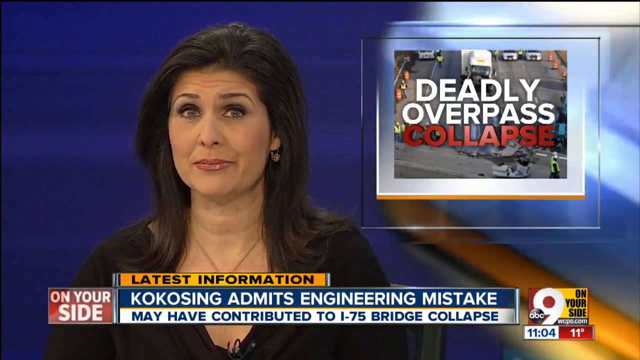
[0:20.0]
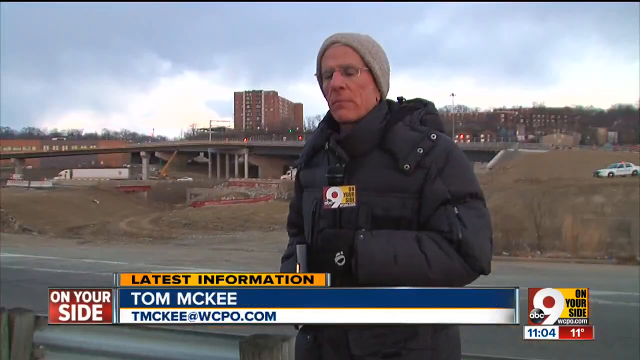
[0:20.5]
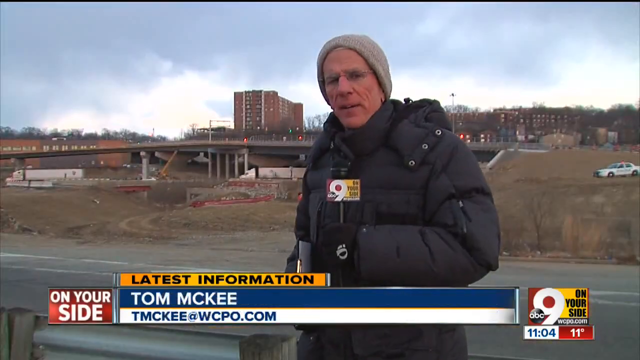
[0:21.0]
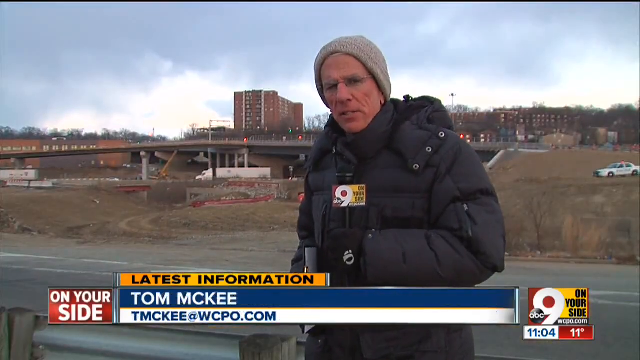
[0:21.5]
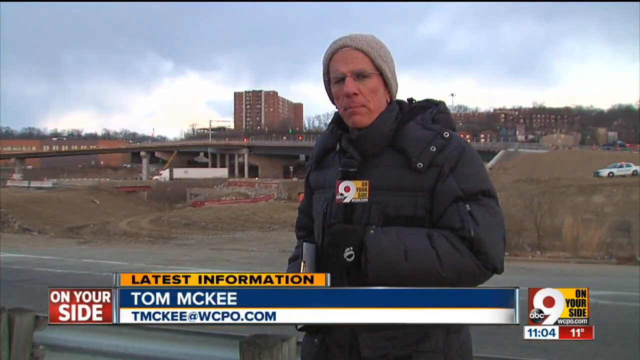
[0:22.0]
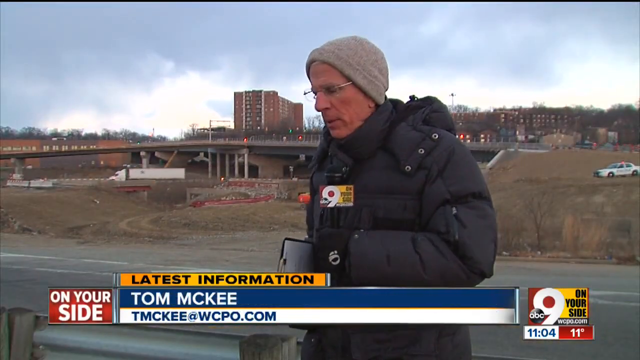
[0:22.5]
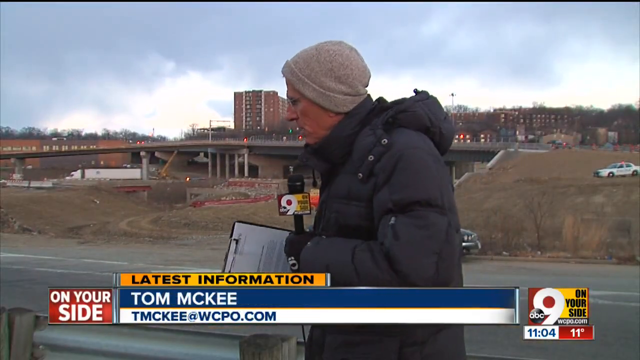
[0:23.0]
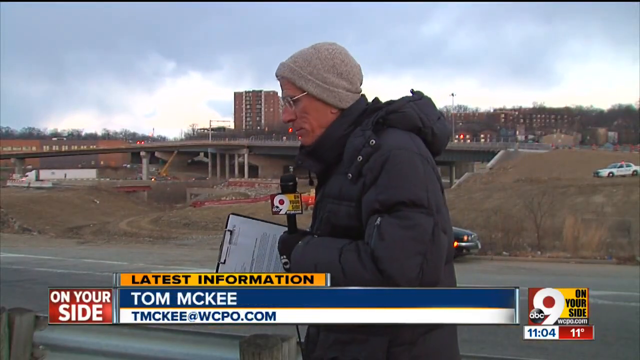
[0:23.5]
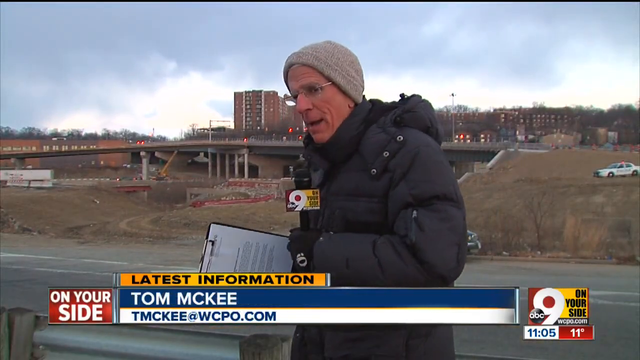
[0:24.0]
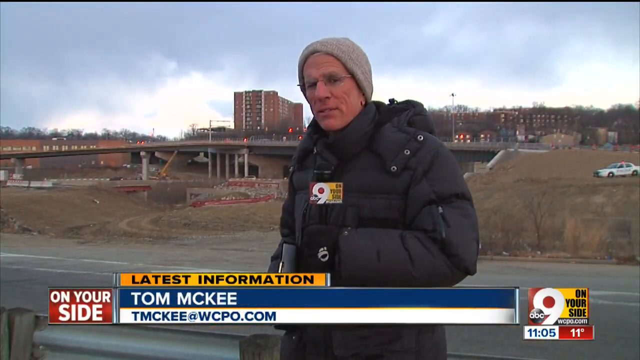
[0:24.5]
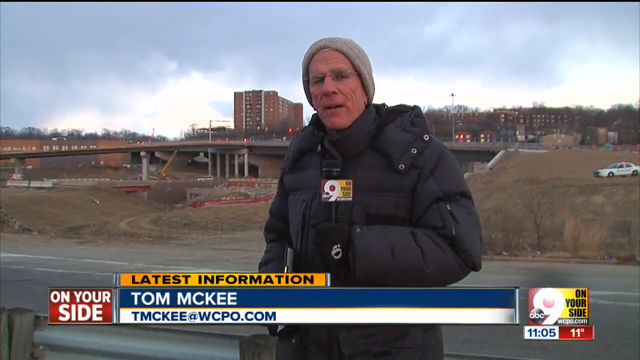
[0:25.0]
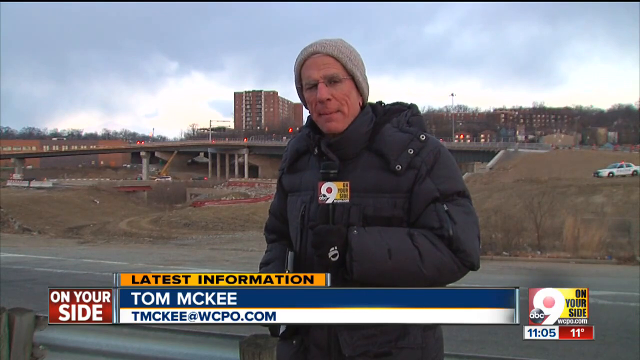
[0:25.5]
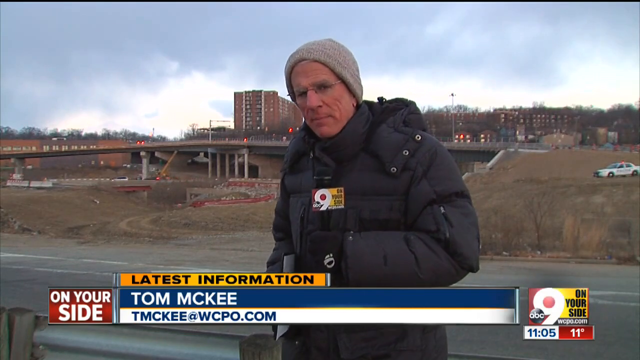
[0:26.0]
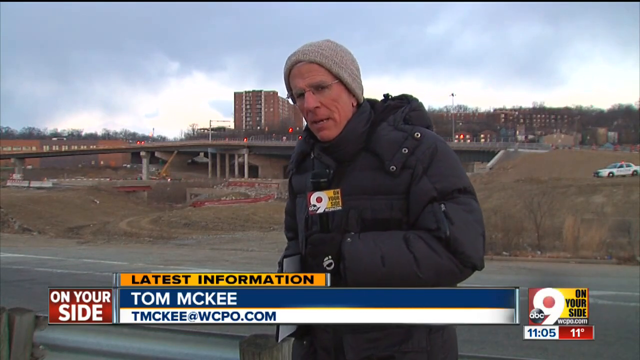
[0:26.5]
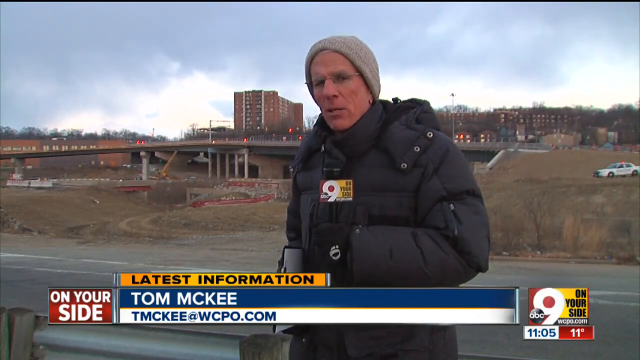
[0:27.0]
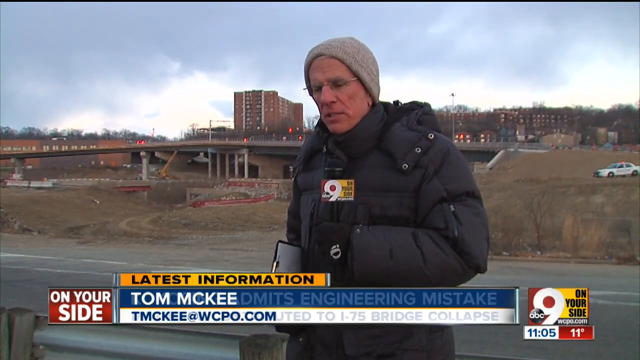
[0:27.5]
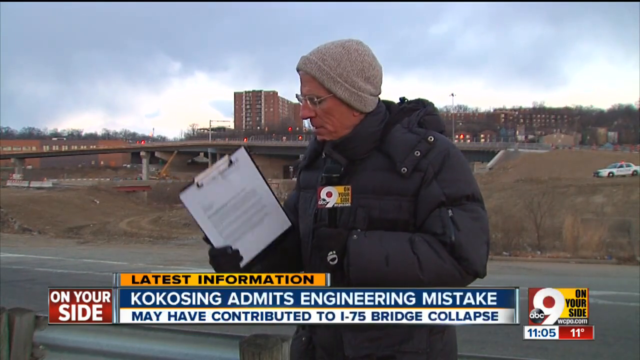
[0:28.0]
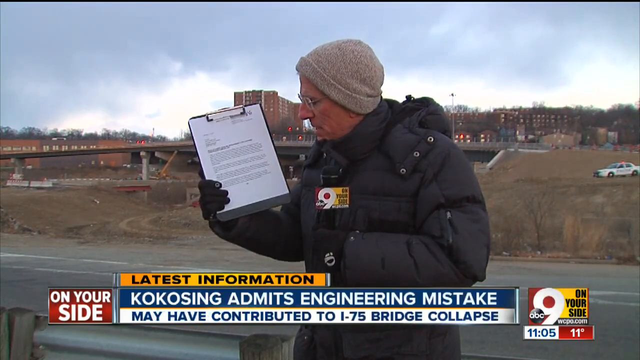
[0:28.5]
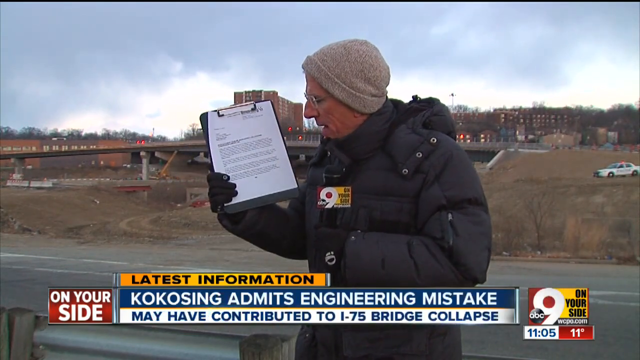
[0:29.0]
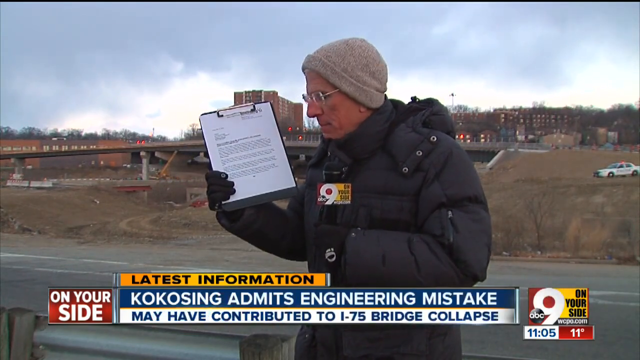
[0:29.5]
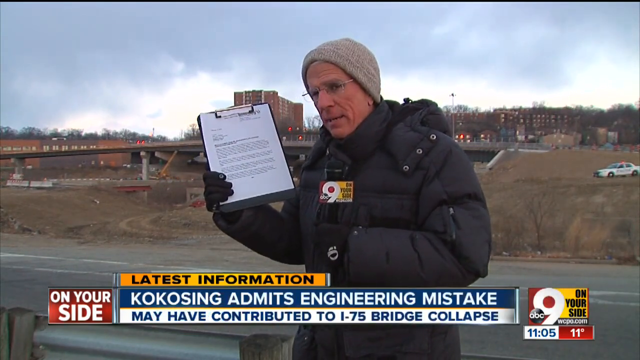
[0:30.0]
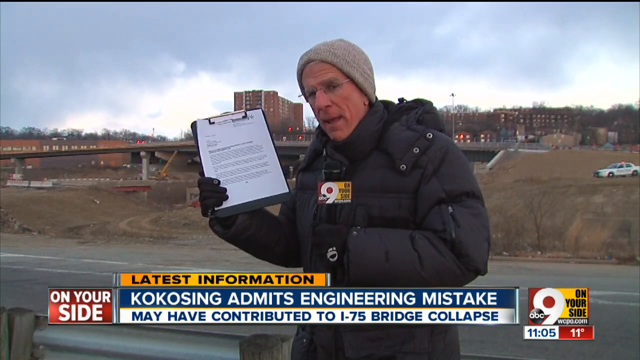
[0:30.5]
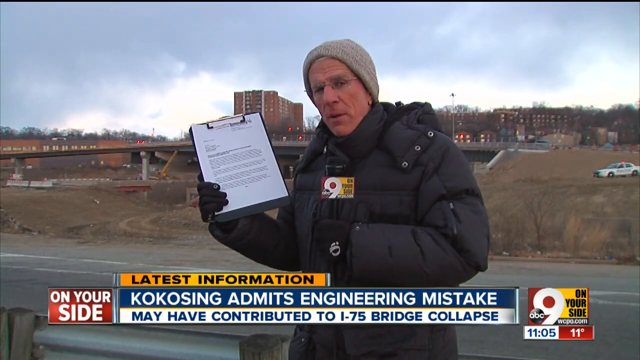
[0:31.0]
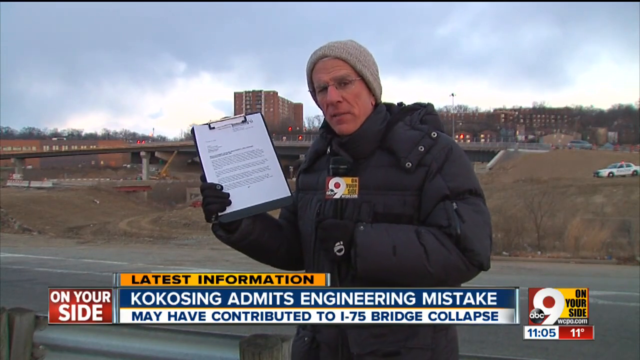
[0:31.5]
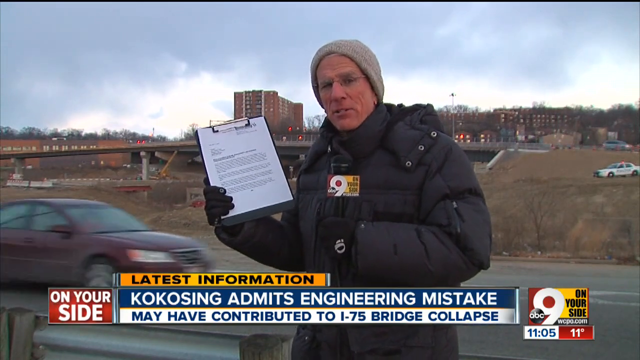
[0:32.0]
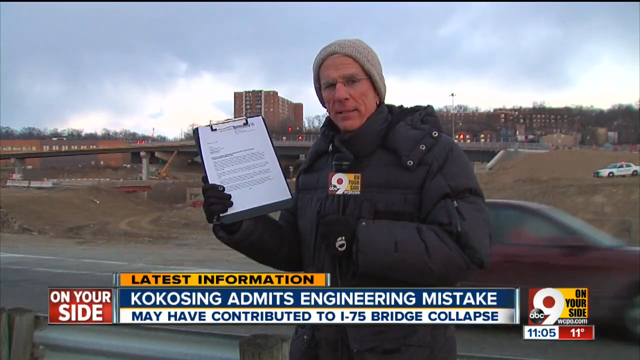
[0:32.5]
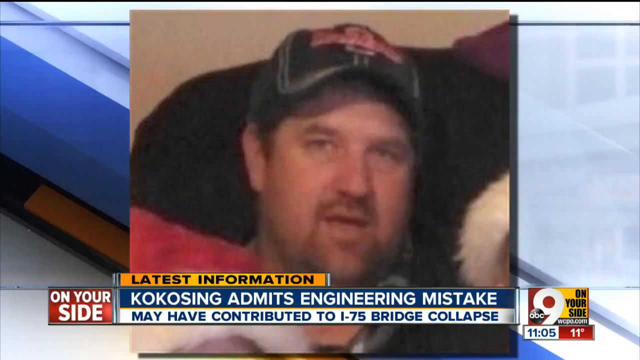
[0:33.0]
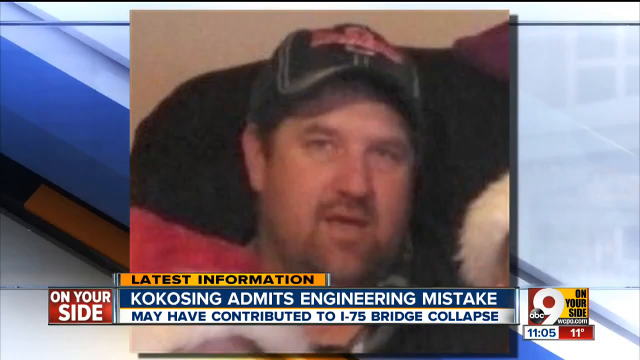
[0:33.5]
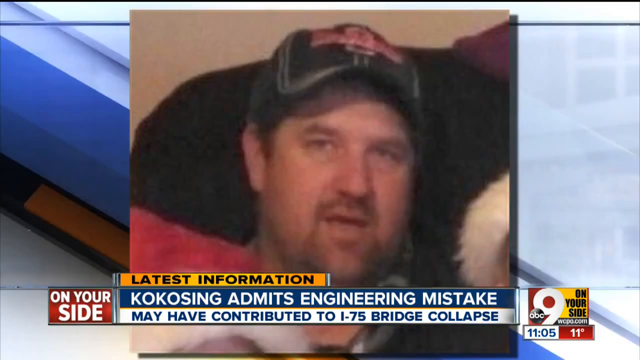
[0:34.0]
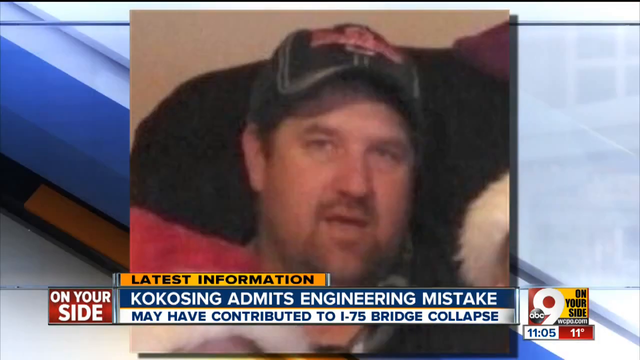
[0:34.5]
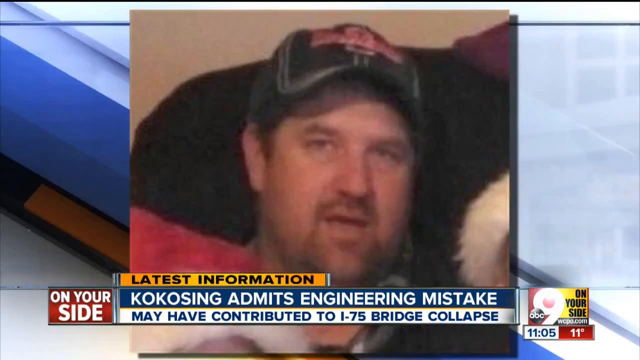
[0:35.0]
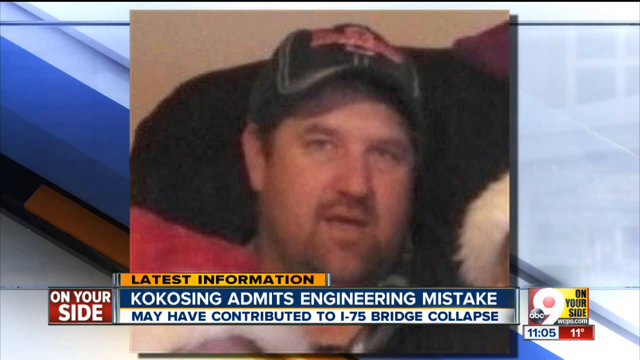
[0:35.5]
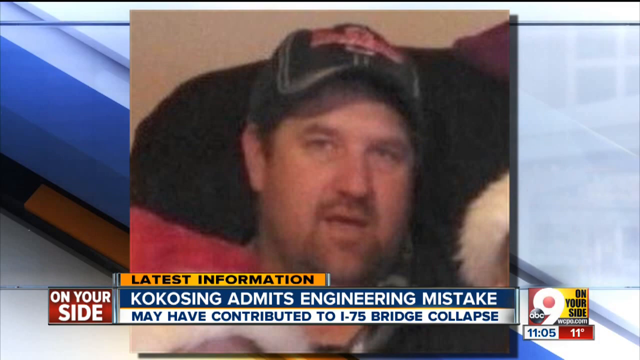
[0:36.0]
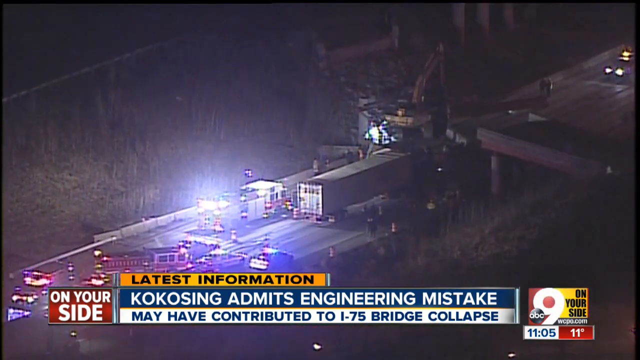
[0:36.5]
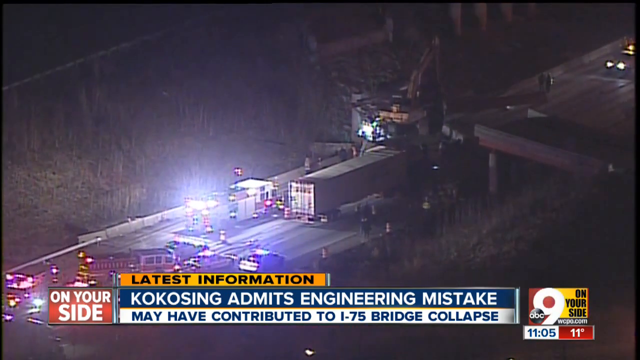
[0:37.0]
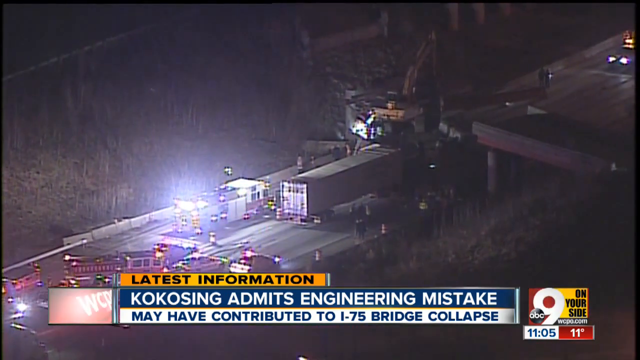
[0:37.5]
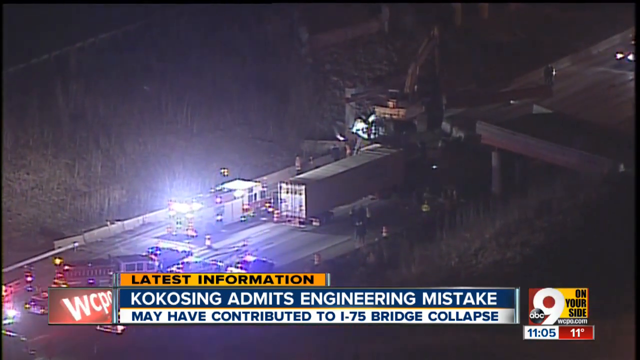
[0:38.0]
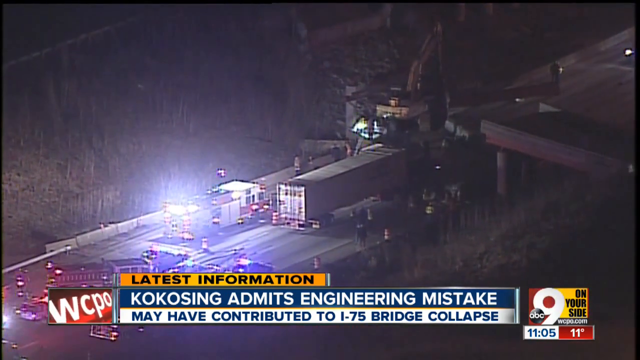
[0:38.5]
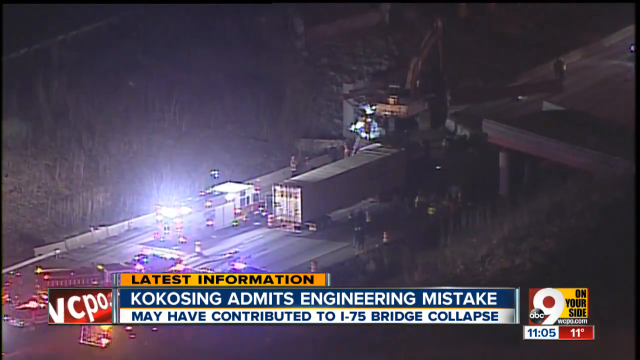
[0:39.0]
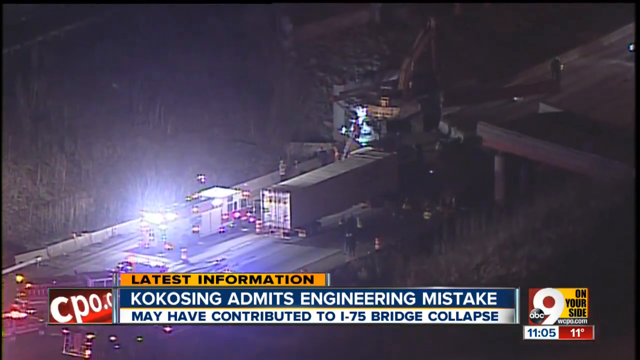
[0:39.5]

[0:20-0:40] The newswoman turns to a reporter on the scene, Tom McKee of wcpo.com, for Channel 9 News, ABC on your side. He stands a good distance away from the collapse, with vehicles moving along the highway in the background. He says that Coco Singh admits to an engineering mistake that may have contributed to the I-75 bridge collapse. He holds up a document, possibly a copy of the police report about a man who was crushed to death. A picture shows the man with his family at home; apparently he was a truck driver who was directly underneath the bridge when it collapsed.